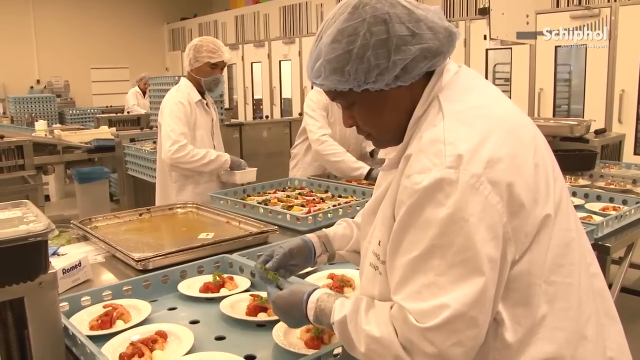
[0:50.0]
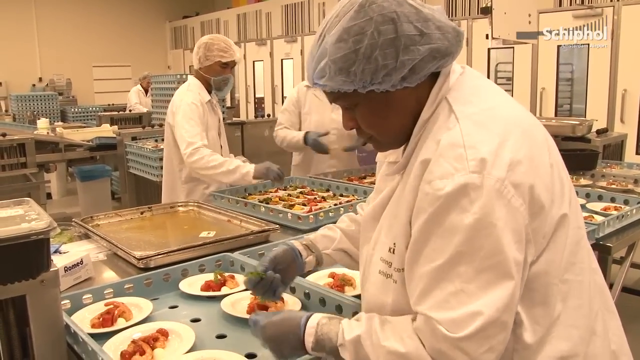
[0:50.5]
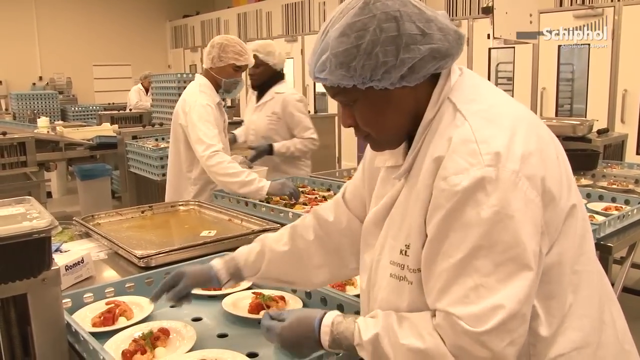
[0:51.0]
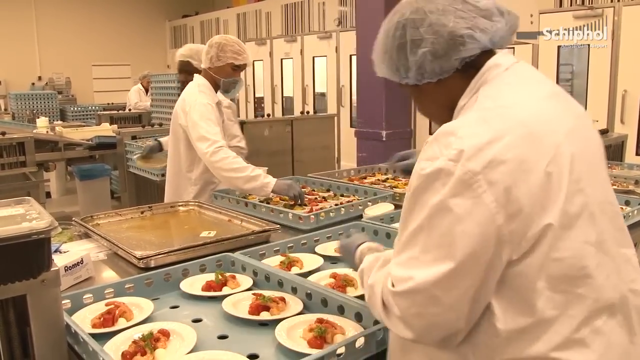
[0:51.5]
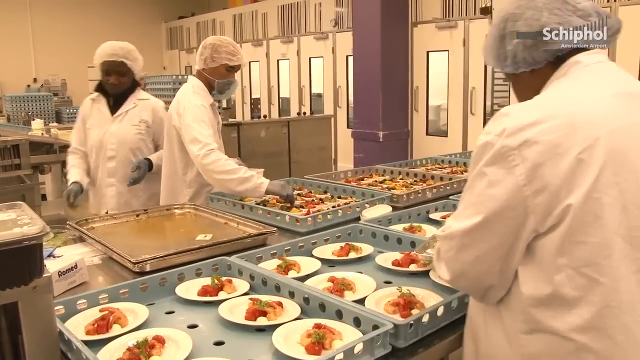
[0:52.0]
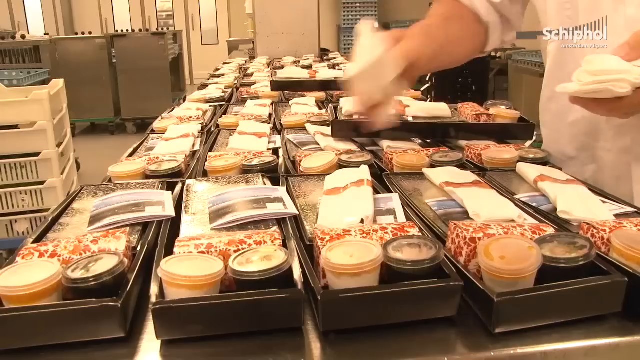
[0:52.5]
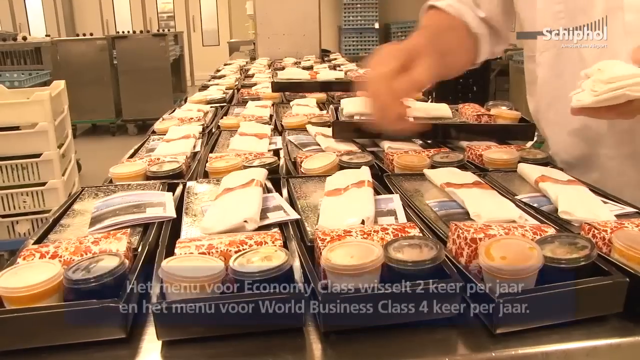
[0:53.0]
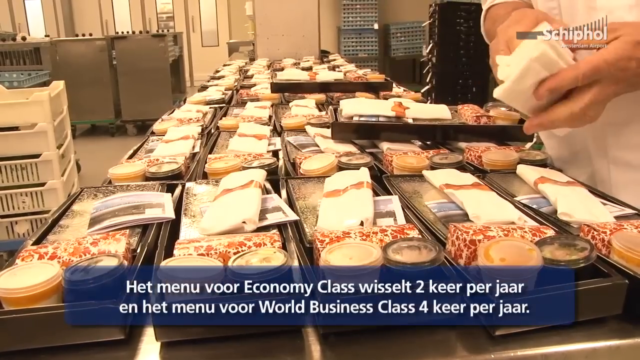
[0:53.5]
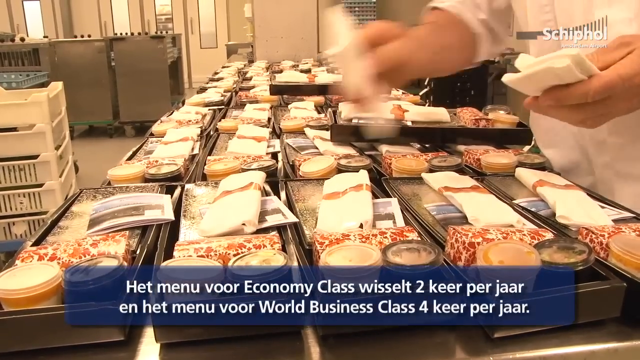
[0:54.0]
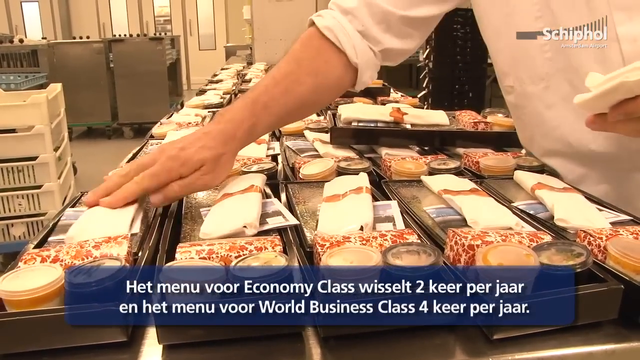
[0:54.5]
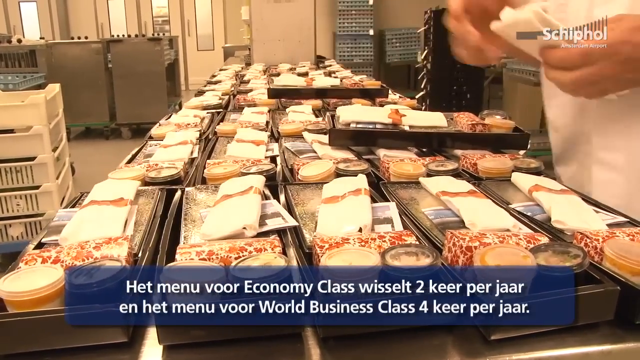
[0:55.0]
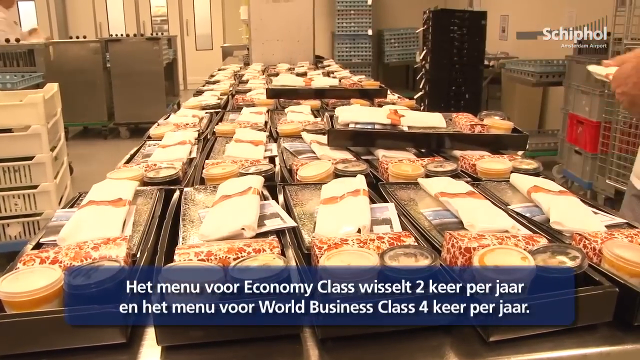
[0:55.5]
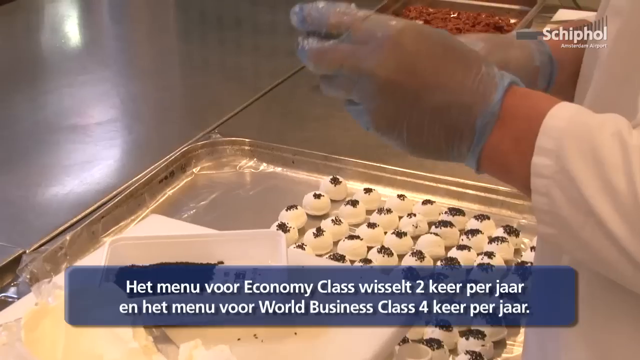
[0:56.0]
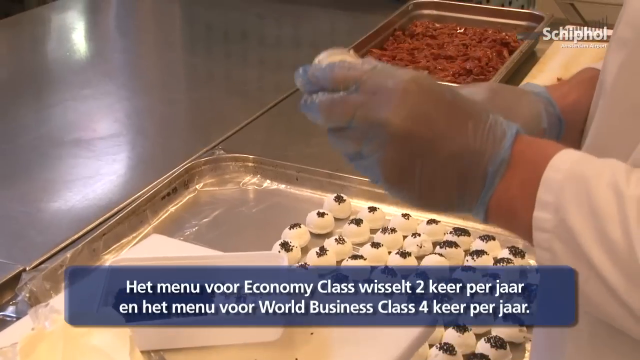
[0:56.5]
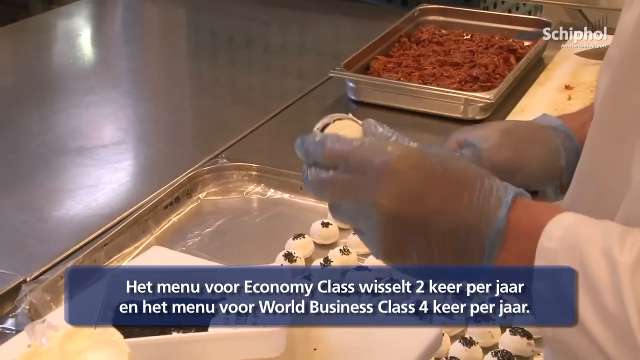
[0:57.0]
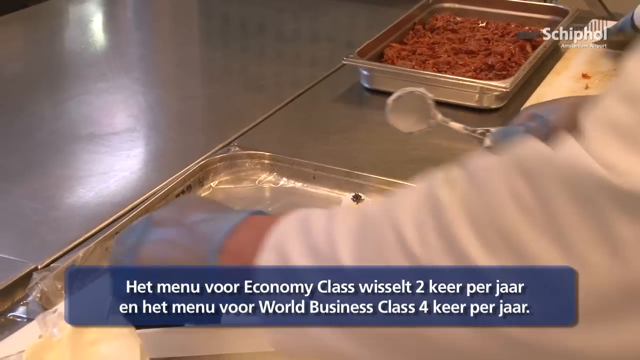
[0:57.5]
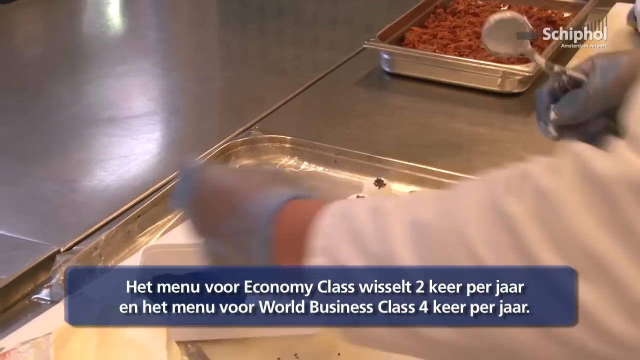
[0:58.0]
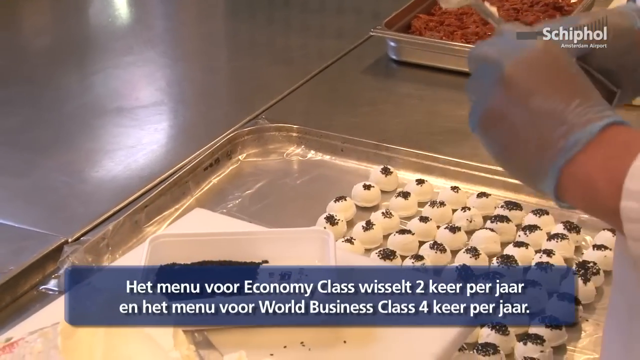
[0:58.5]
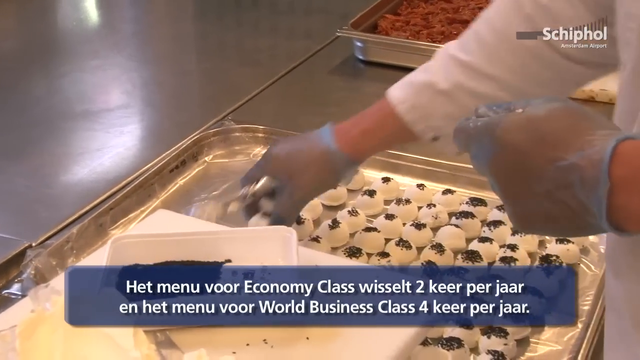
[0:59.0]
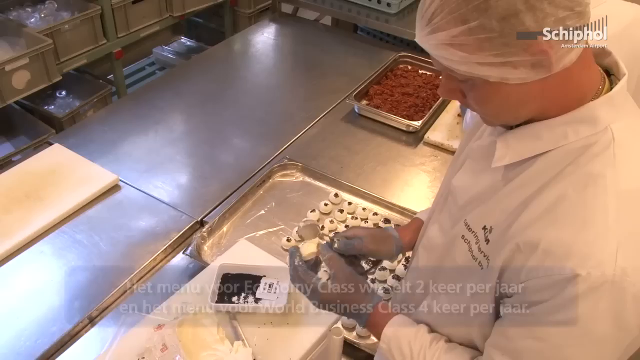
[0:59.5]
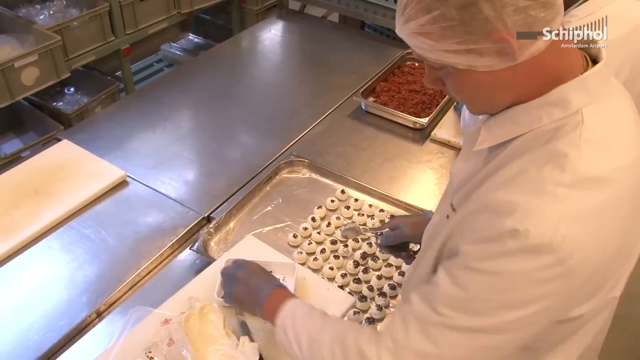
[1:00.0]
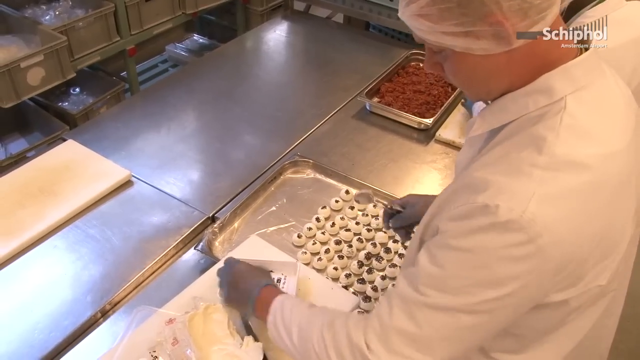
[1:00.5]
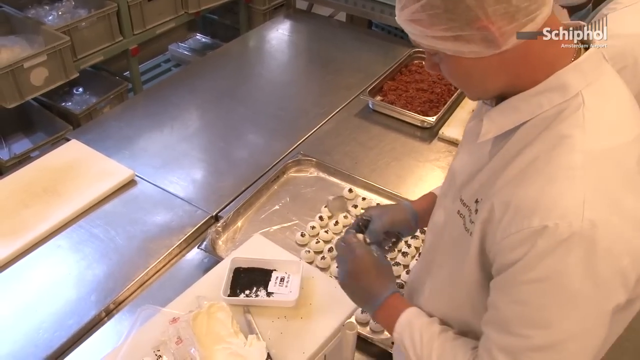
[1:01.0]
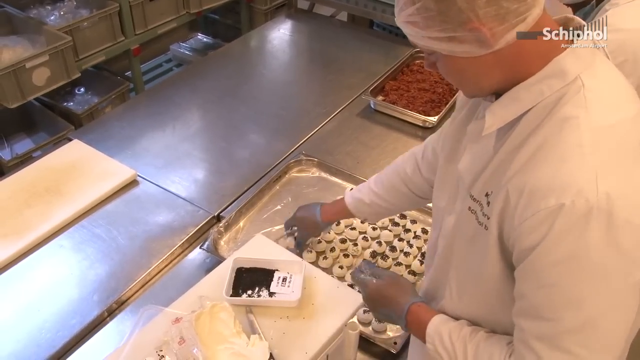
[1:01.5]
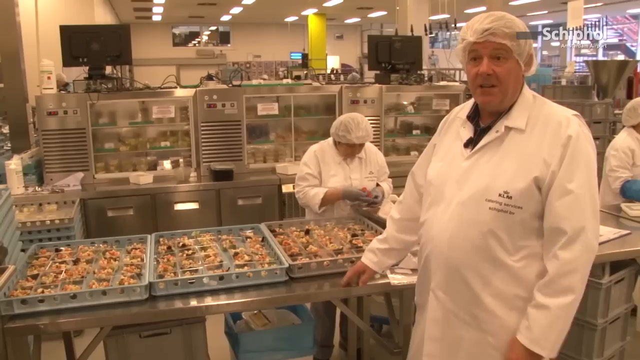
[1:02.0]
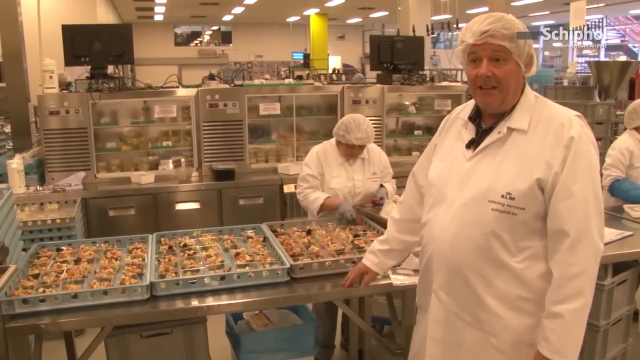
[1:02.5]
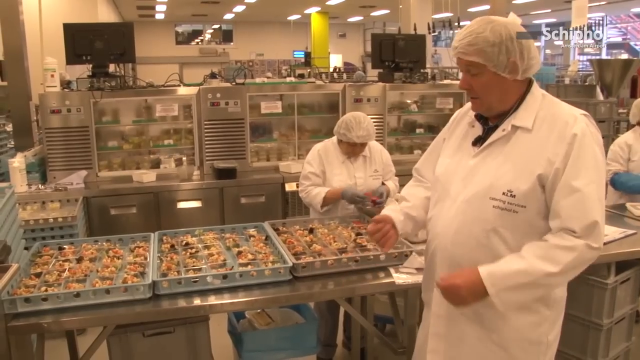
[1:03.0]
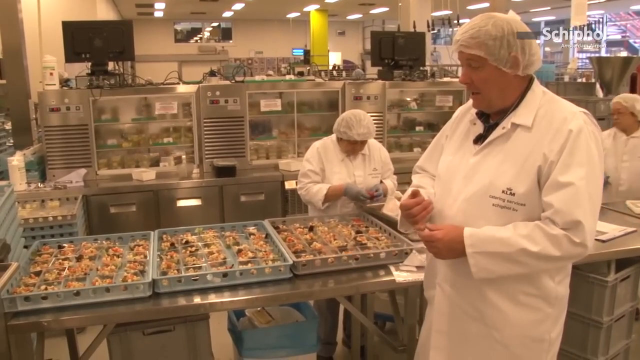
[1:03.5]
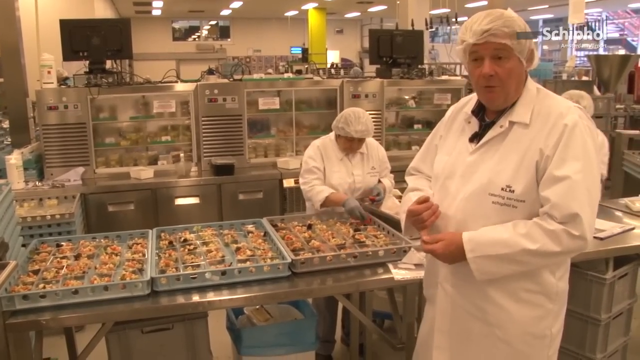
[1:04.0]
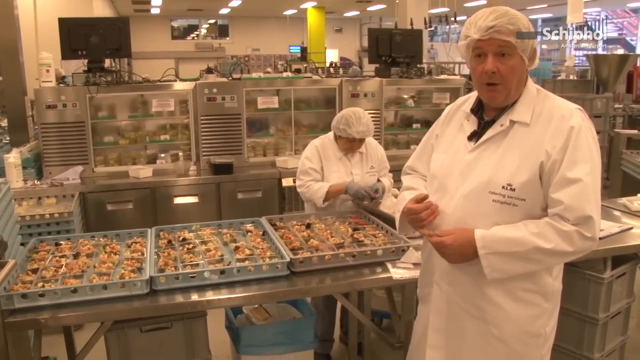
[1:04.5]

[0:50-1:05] The chef, apparently the head chef, wears a white hairnet and a white chef's jacket and stands in front of a stainless steel table with large plastic trays holding plates of food. Another shot shows a person, with a couple of people working in the background. A chef scoops out some sort of dessert and places little scoops into a silver, aluminum tray; the dessert is white with something black on top, possibly chocolate chips. In another shot, someone puts something onto a plate of food, possibly a piece of bread. Throughout these scenes, other chefs work in the background of the commercial kitchen at the airport.